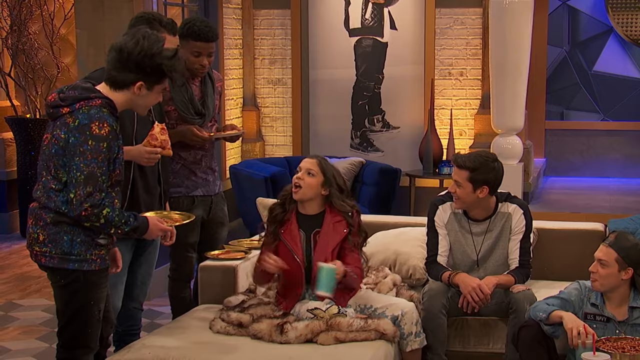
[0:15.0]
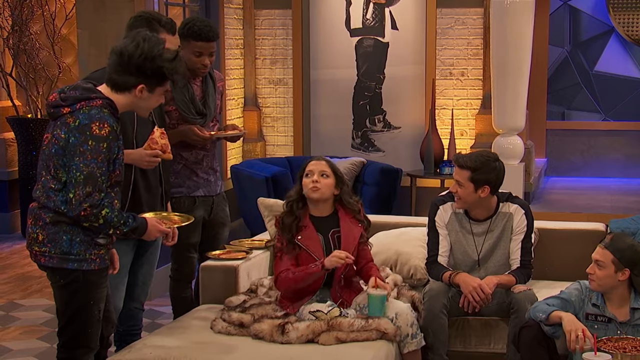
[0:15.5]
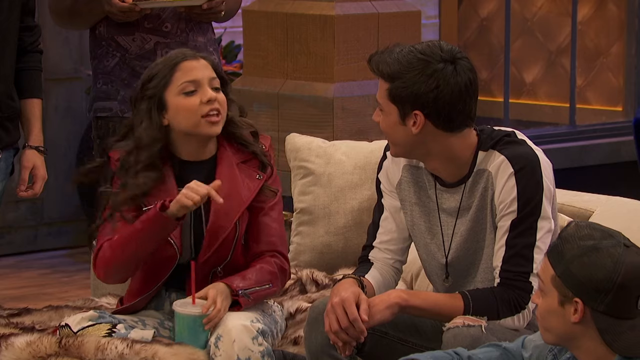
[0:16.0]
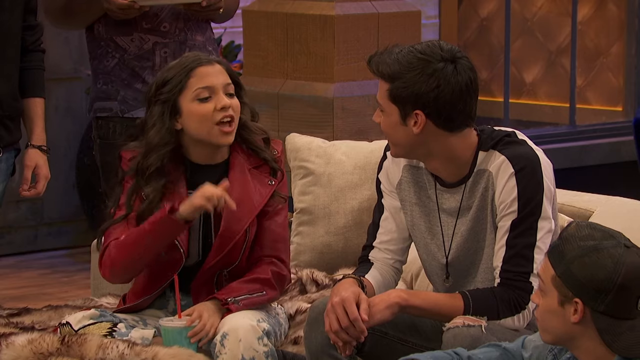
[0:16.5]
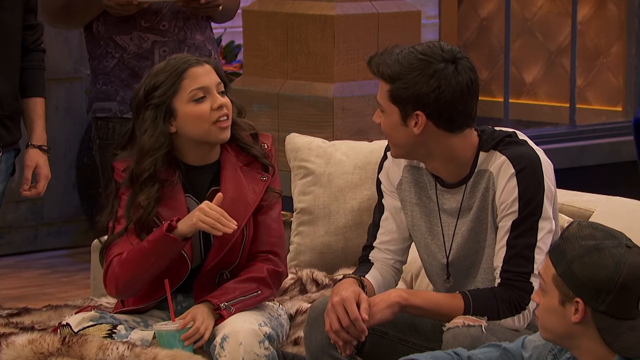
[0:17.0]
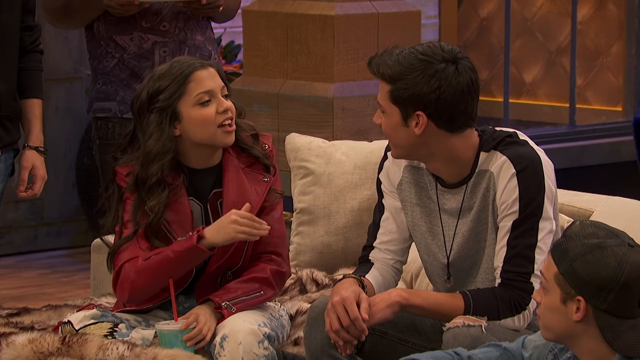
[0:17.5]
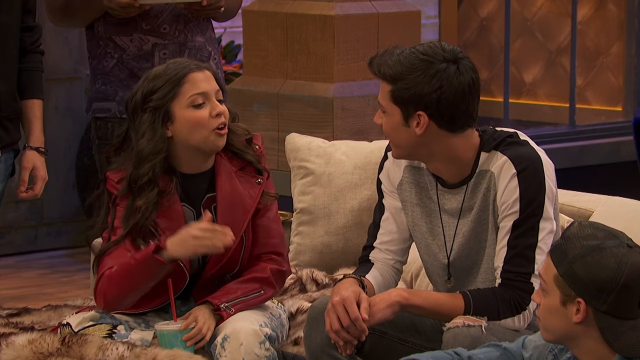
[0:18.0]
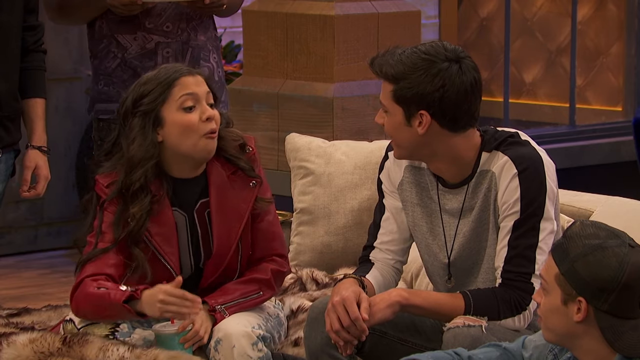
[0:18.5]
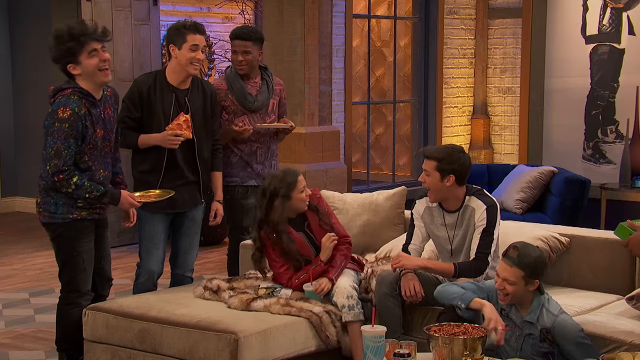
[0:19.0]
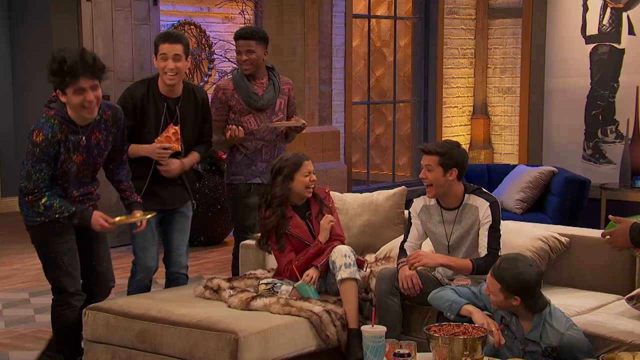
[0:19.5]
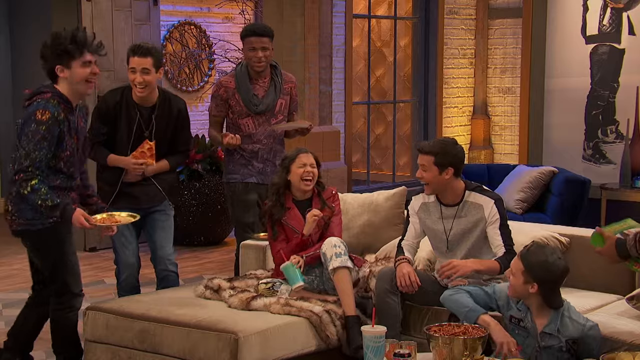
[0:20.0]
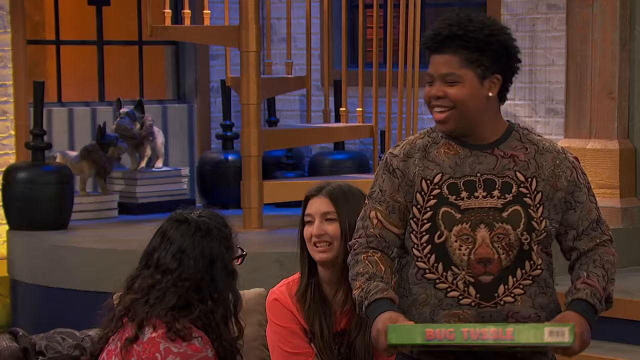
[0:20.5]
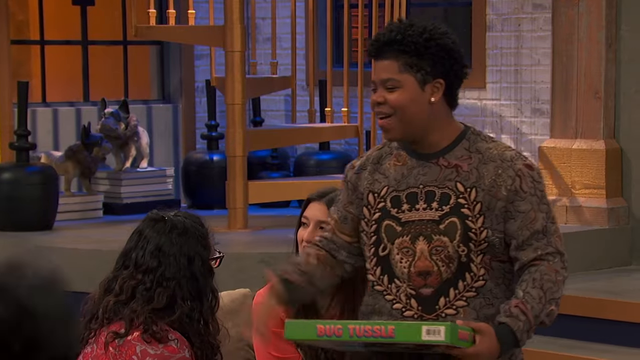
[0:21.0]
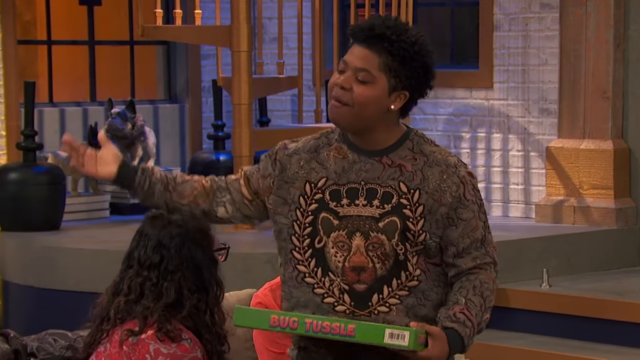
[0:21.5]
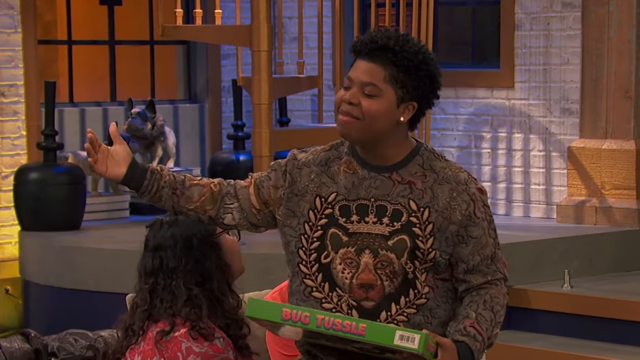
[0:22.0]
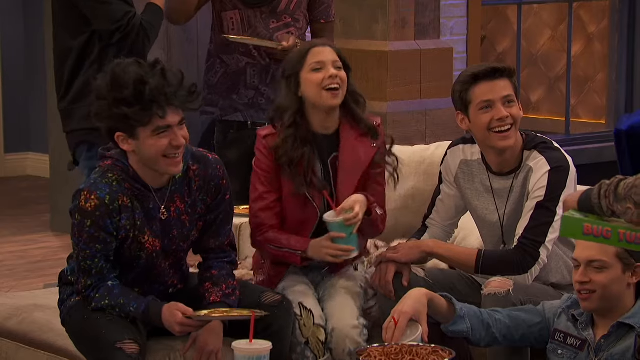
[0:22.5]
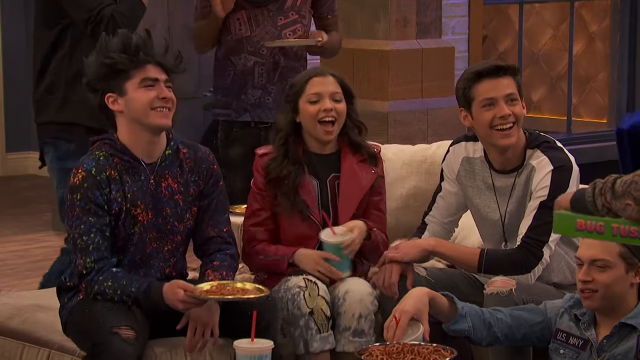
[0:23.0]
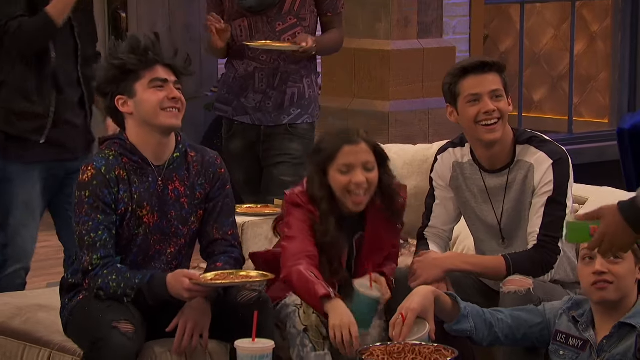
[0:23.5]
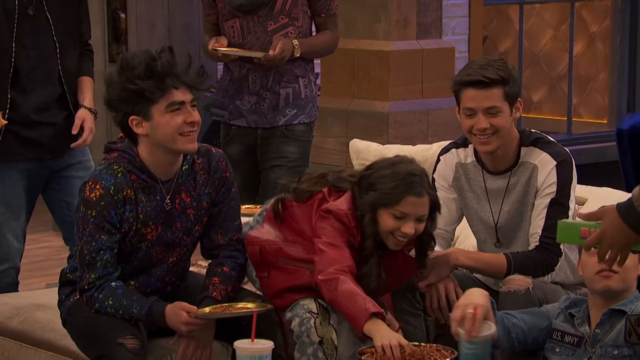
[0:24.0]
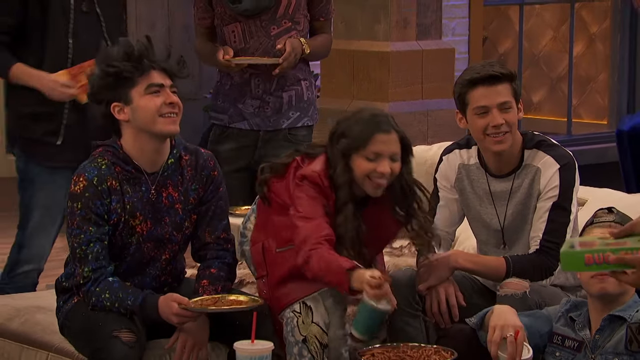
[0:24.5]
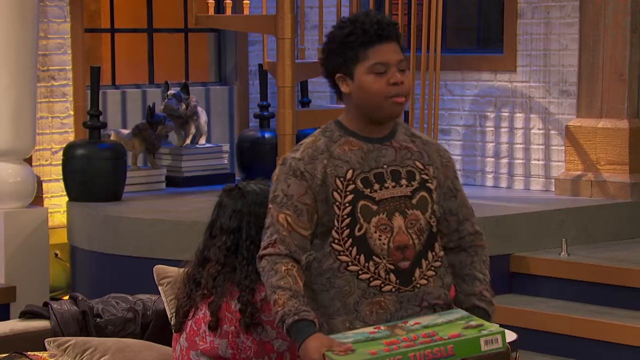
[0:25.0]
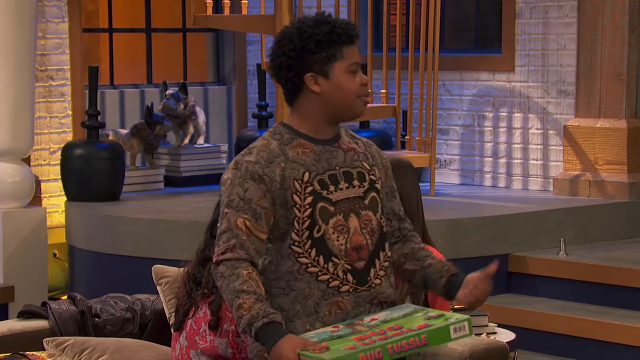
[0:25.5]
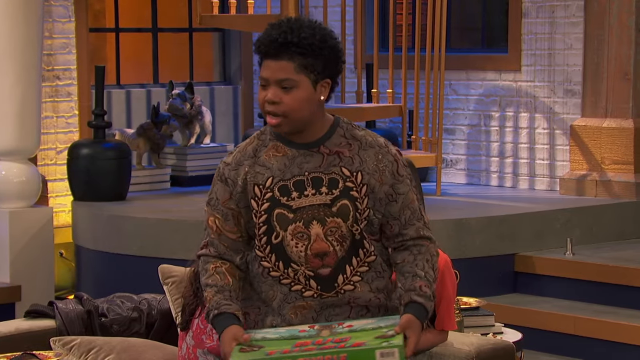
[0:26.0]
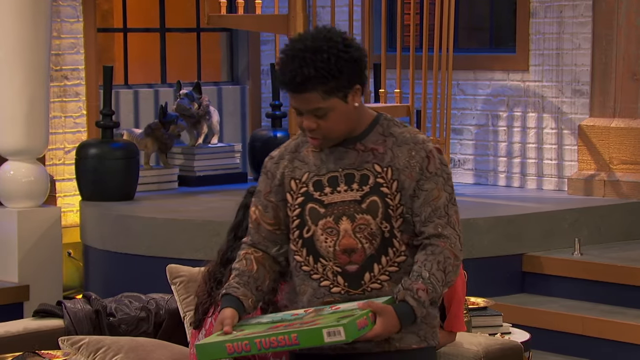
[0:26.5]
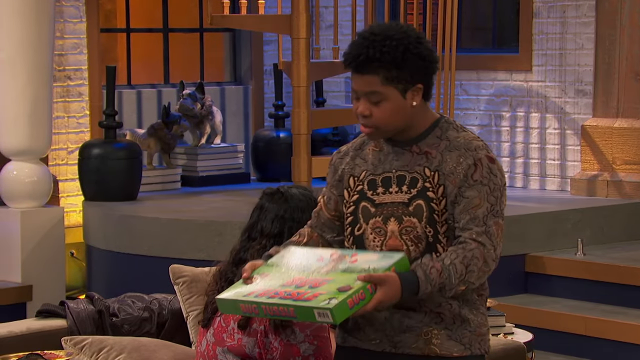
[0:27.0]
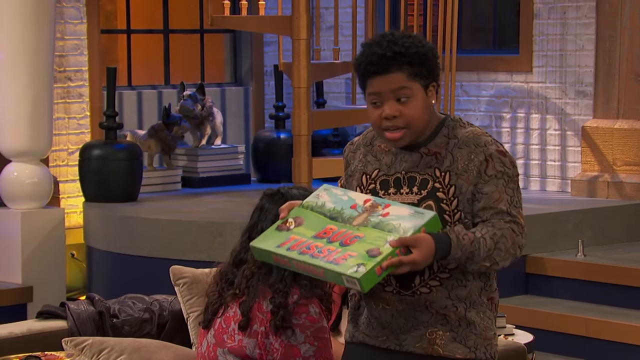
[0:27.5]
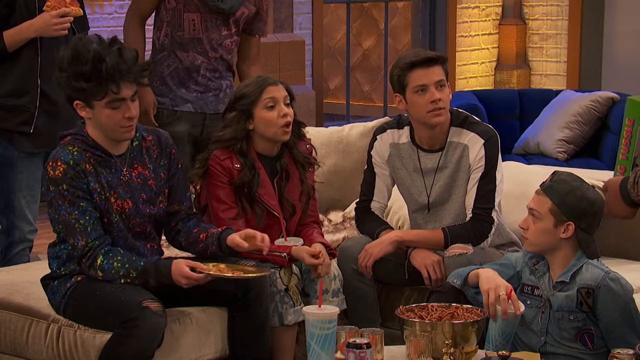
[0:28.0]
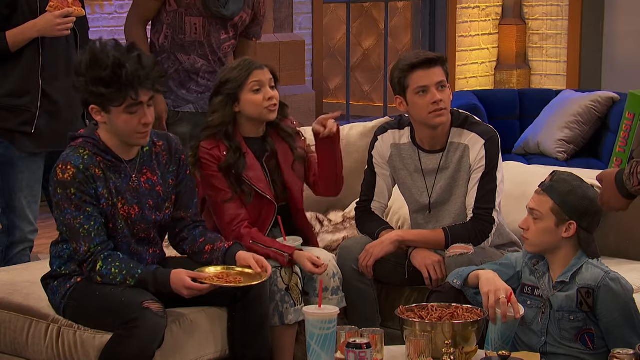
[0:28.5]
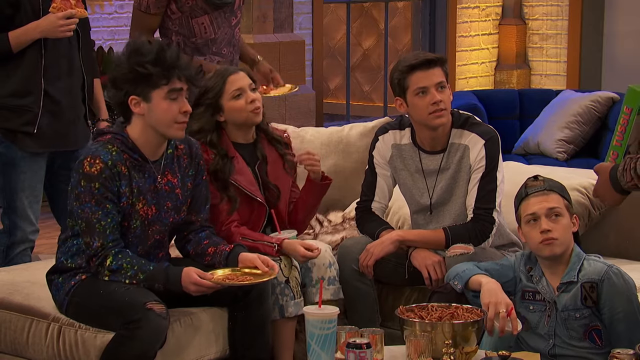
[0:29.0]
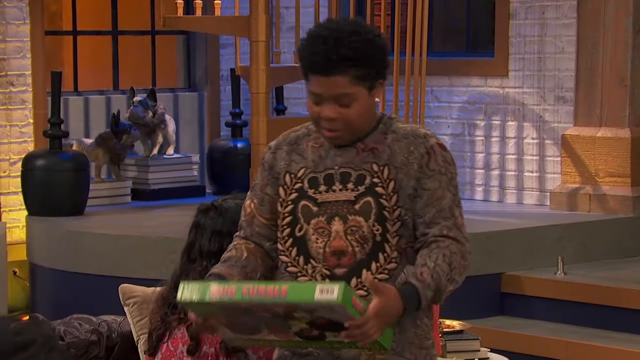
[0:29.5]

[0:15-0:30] Preteens or young teenagers of differing ages and ethnicities are in a room. A young African-American man is attempting to get someone interested in a box he holds in his hand, which appears to be a board game. The others appear mildly interested and are laughing, though it is unclear exactly what they are engaging in or what the source of the humor is. Everyone is having fun and laughing, with food and drink in the room.